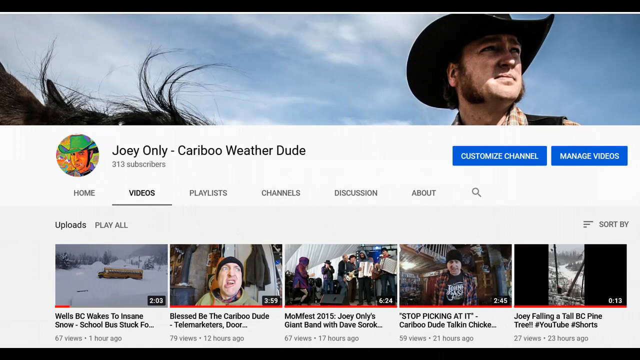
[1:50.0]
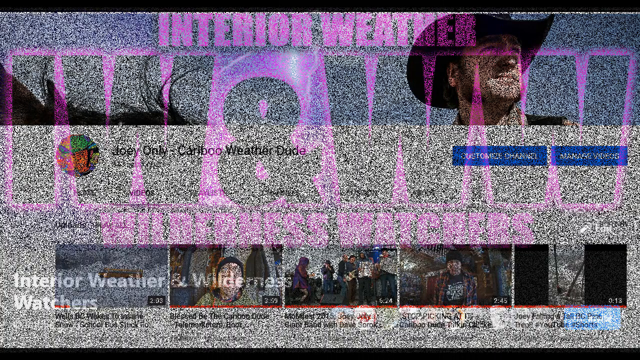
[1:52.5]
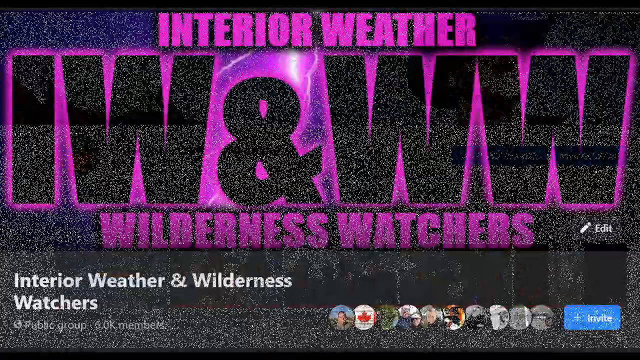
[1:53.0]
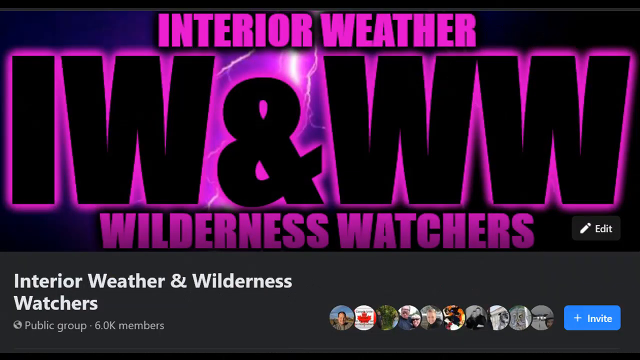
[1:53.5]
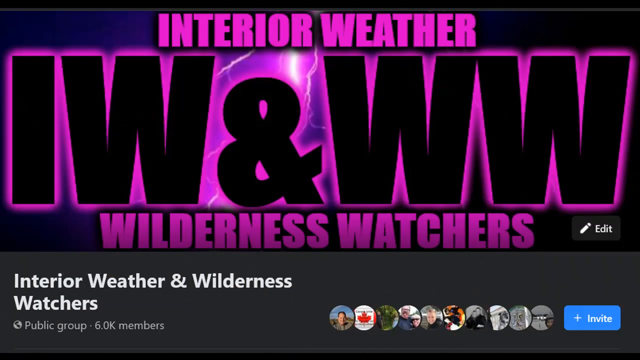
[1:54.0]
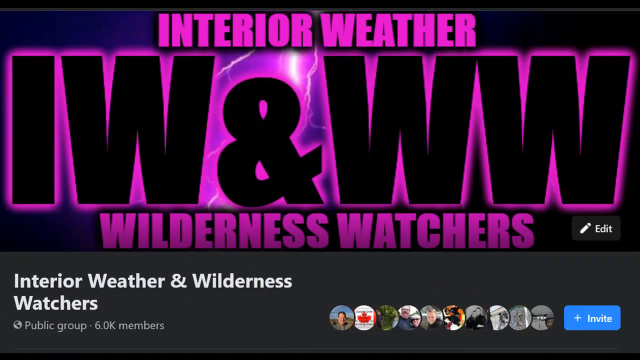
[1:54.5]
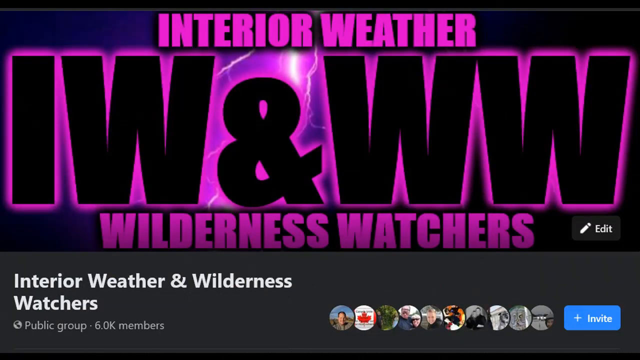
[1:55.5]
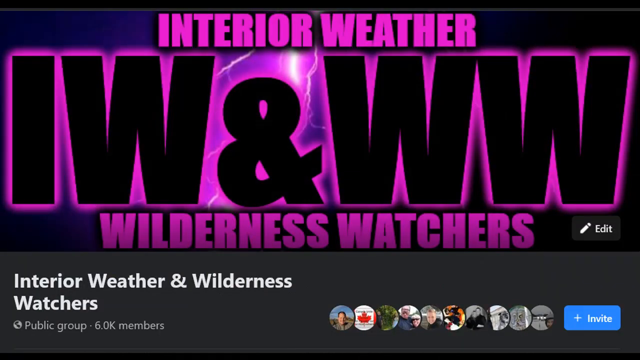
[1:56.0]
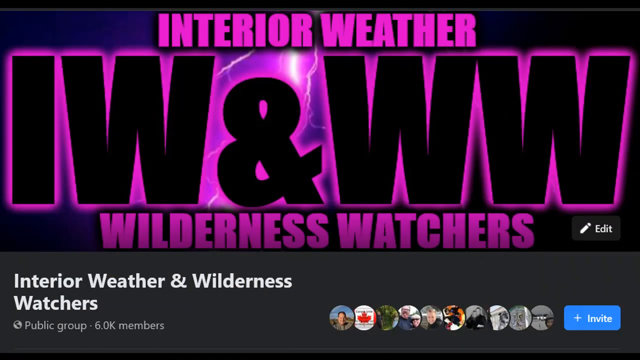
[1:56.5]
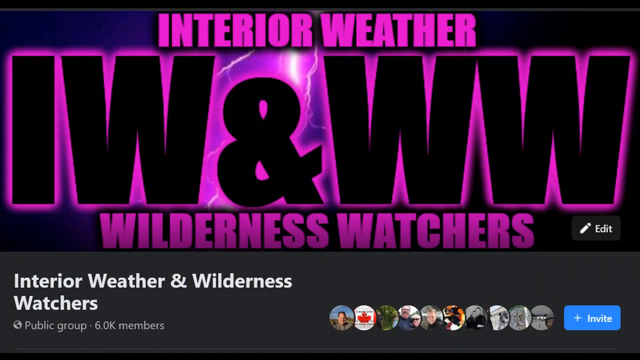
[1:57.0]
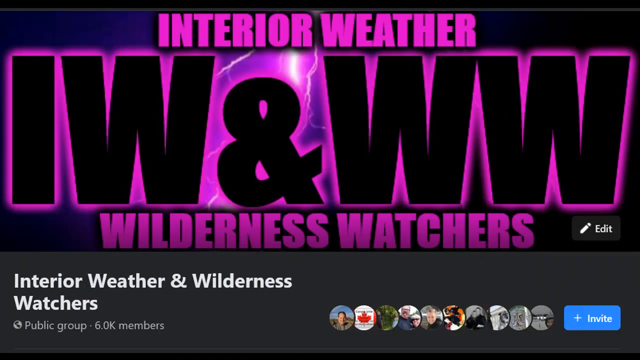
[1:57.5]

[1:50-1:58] A post from a website shows the name "Caribou's weather dude", probably a weather forecaster, with different locations visible. Down below is a YouTube video of a different event from his page.